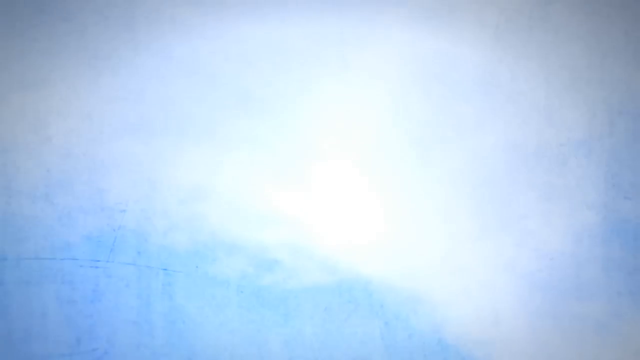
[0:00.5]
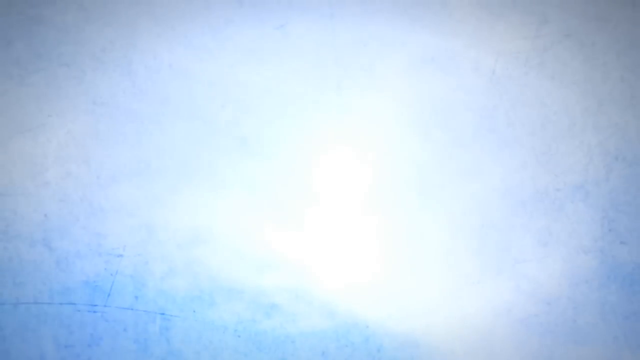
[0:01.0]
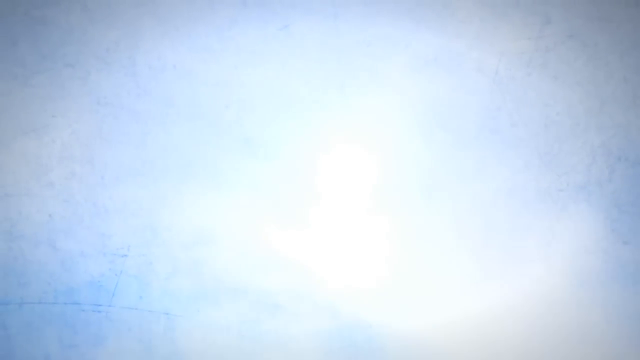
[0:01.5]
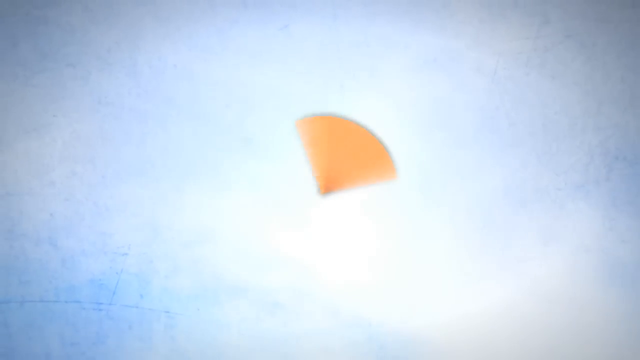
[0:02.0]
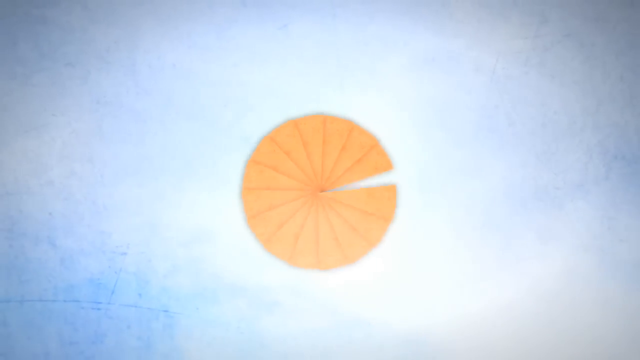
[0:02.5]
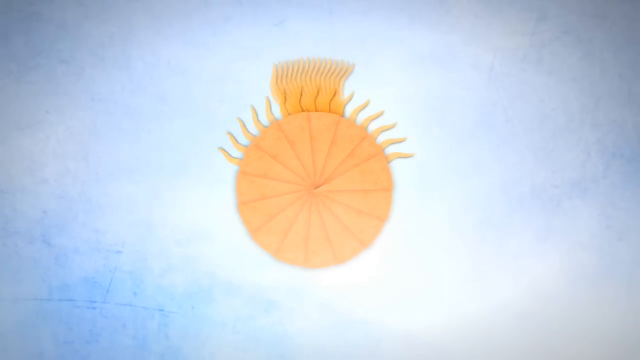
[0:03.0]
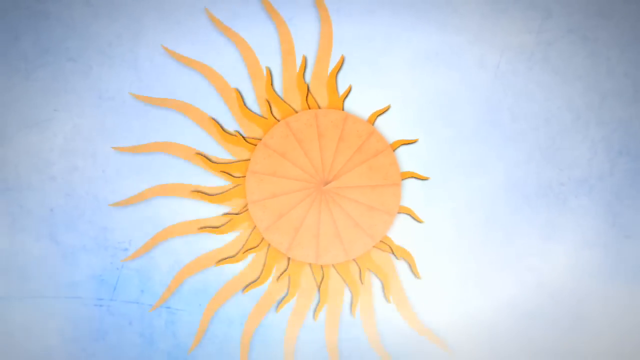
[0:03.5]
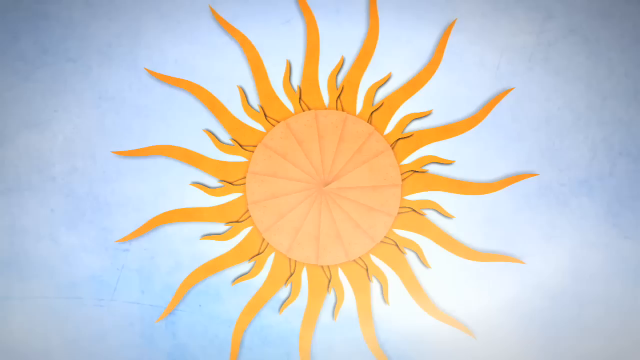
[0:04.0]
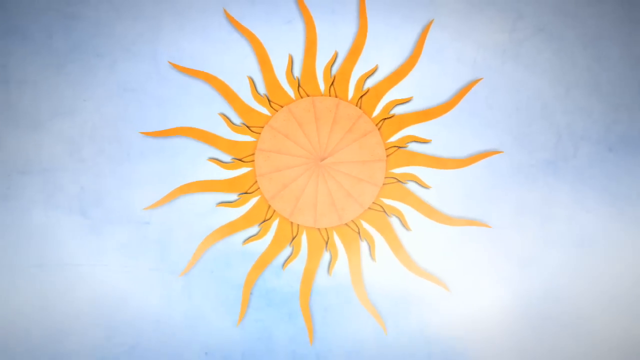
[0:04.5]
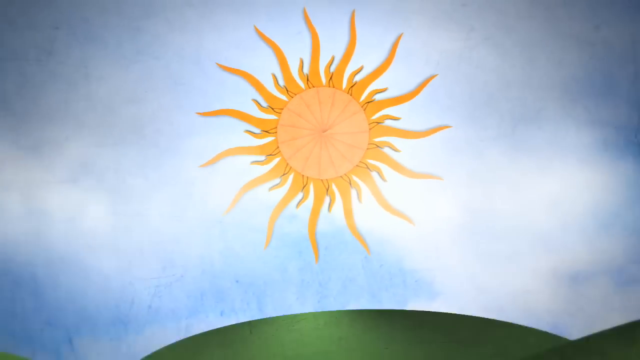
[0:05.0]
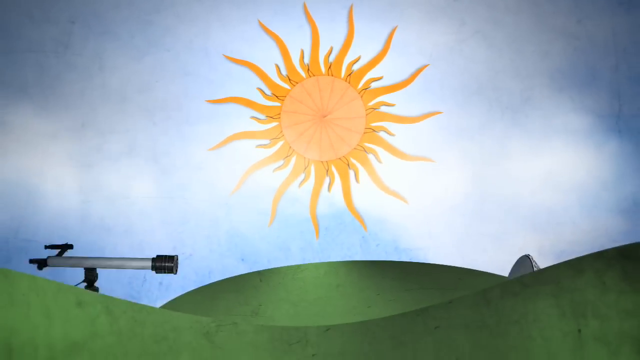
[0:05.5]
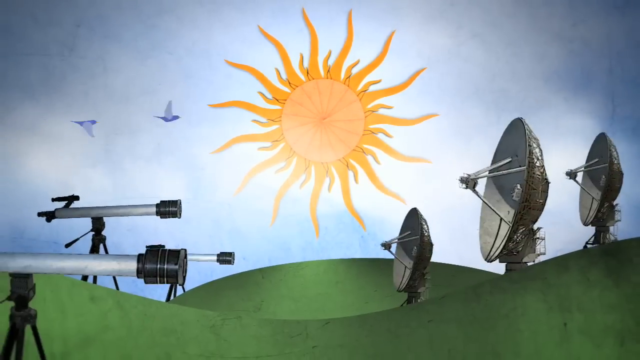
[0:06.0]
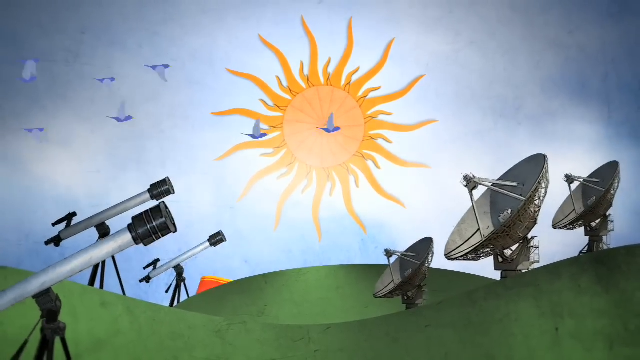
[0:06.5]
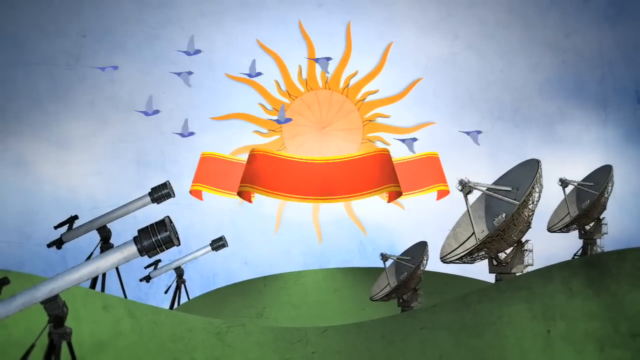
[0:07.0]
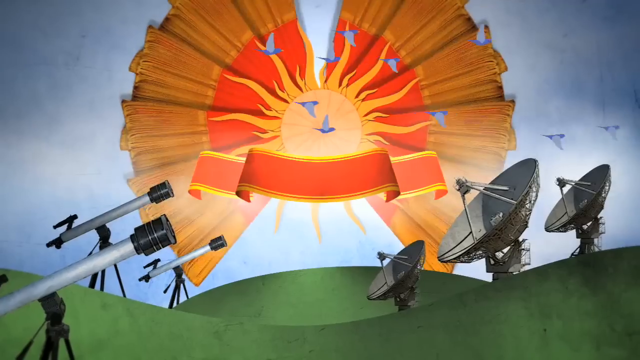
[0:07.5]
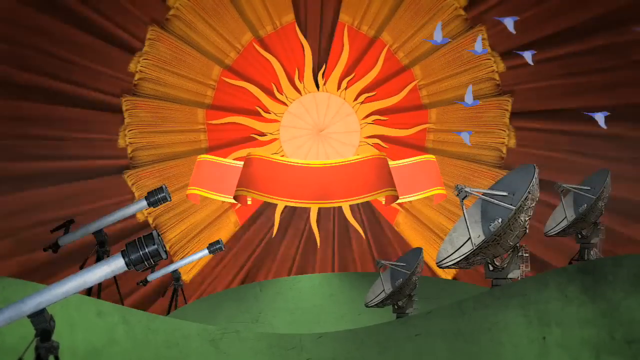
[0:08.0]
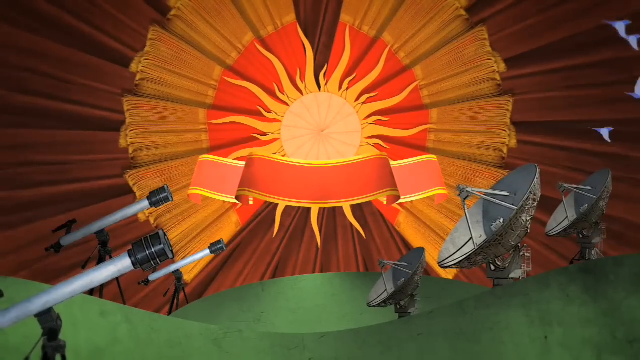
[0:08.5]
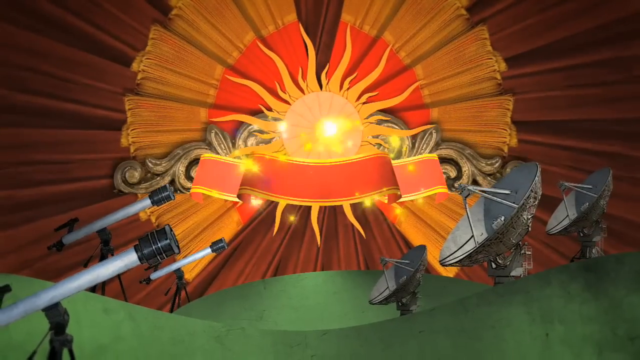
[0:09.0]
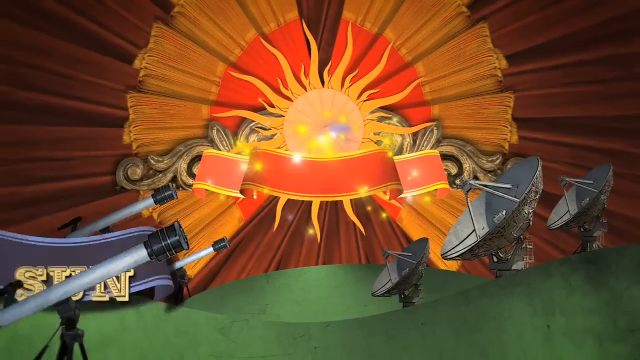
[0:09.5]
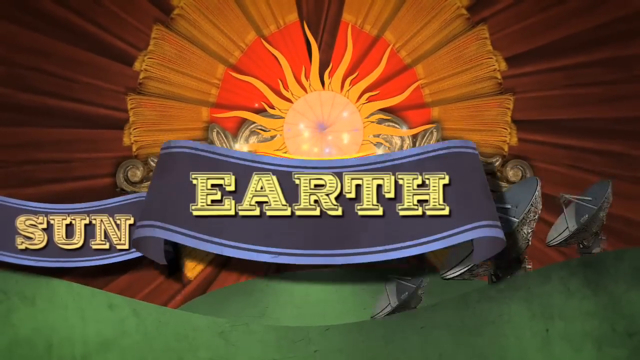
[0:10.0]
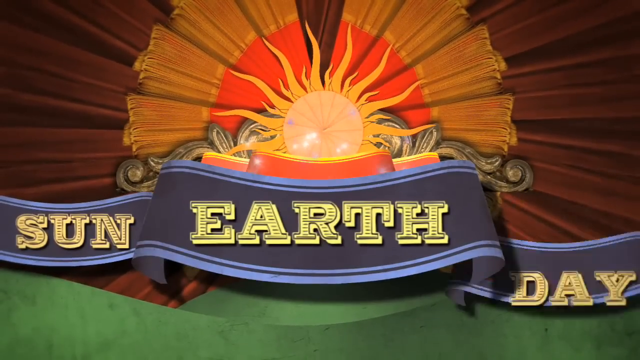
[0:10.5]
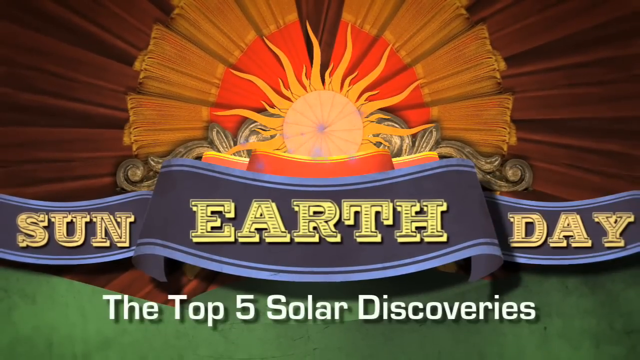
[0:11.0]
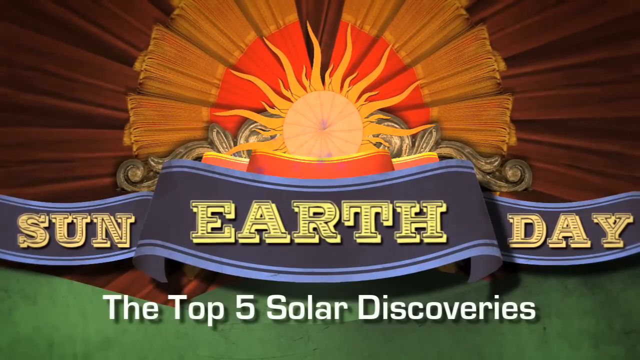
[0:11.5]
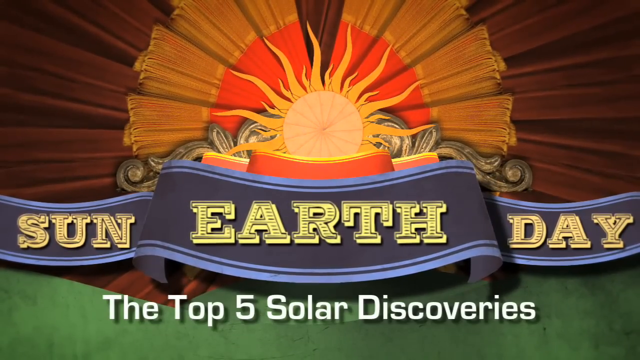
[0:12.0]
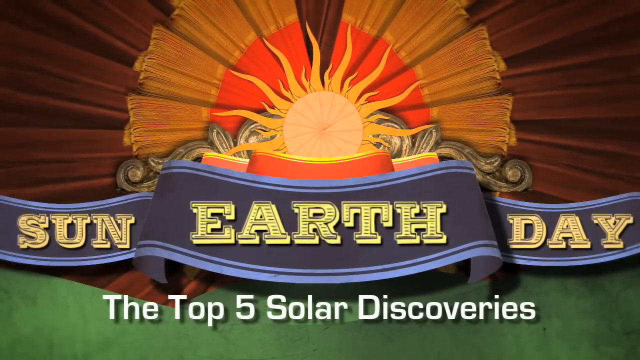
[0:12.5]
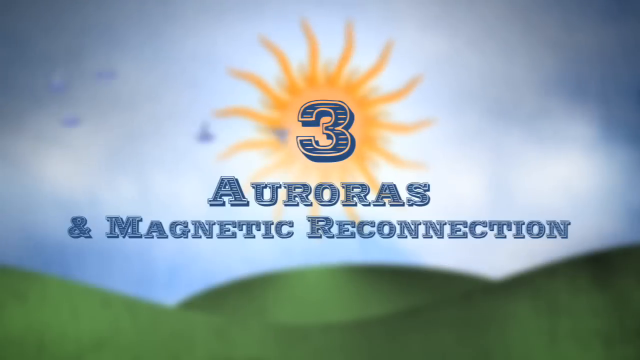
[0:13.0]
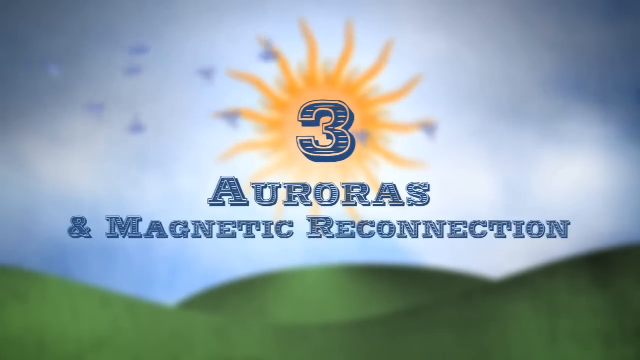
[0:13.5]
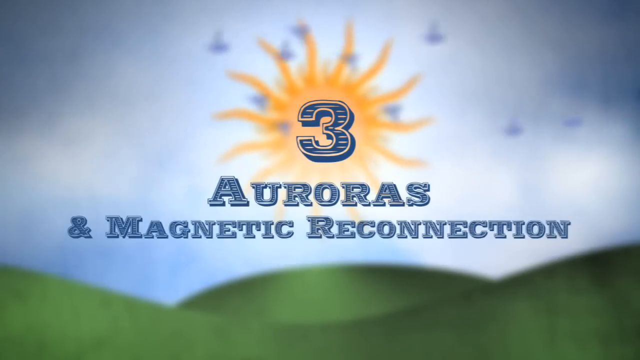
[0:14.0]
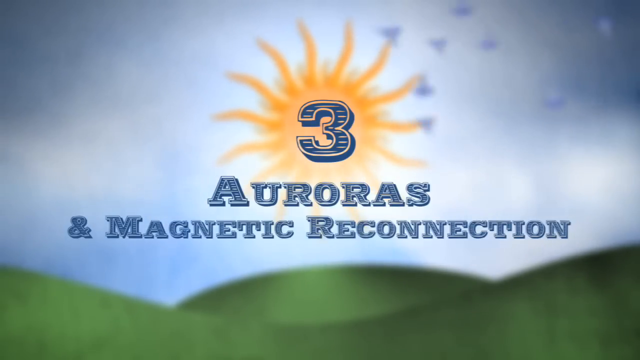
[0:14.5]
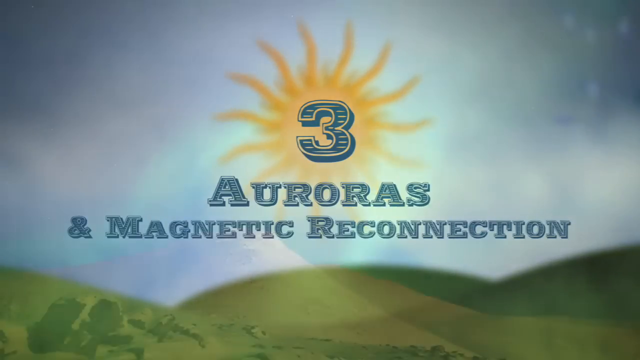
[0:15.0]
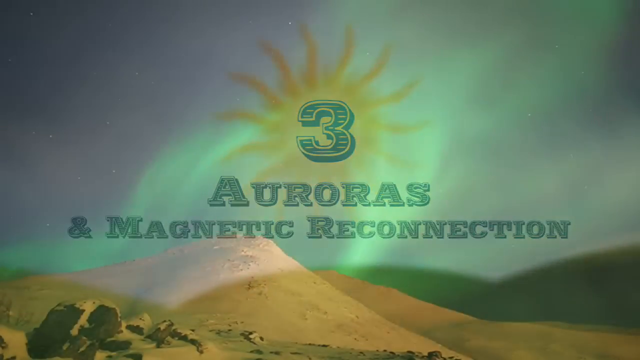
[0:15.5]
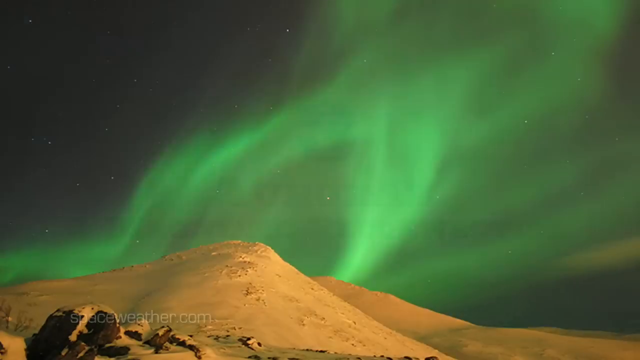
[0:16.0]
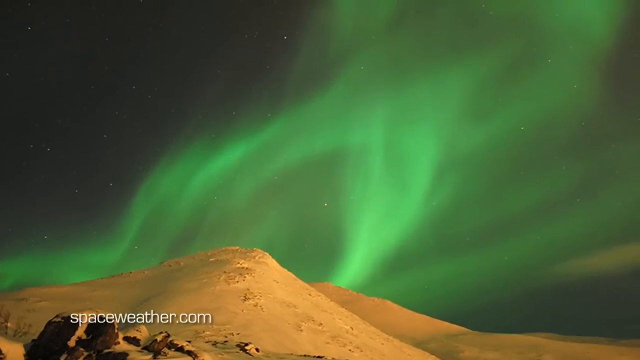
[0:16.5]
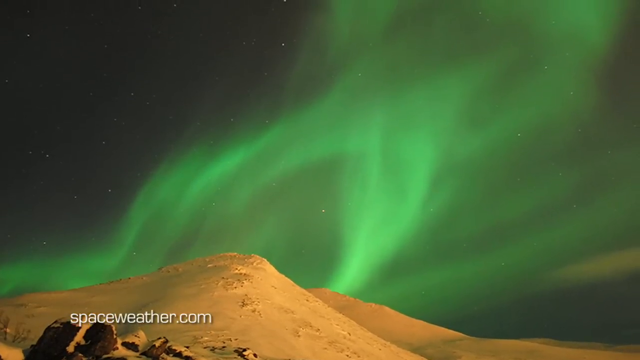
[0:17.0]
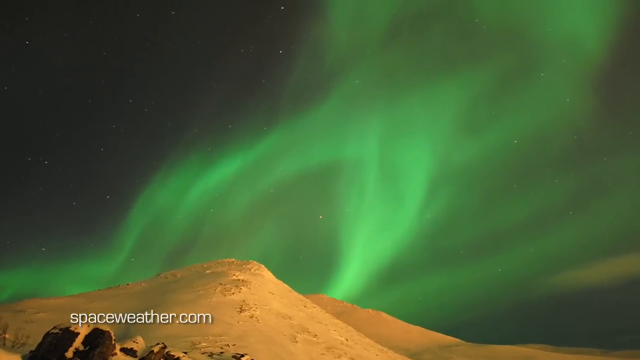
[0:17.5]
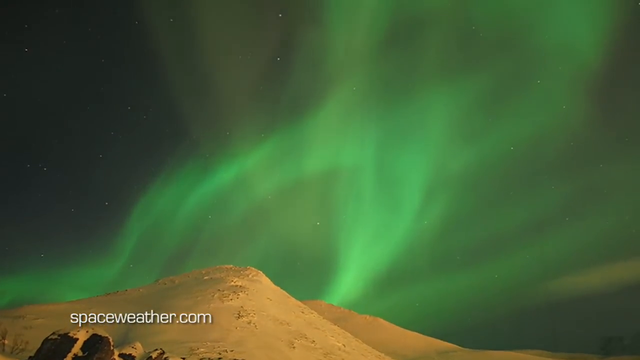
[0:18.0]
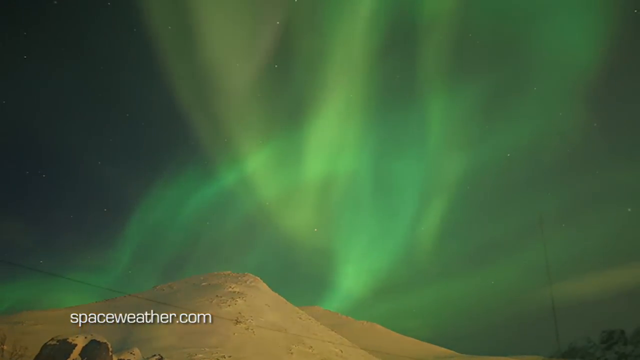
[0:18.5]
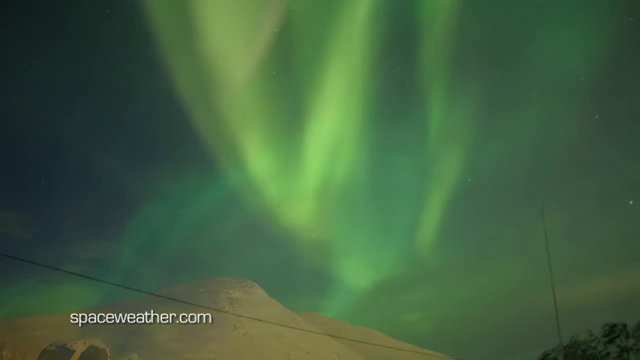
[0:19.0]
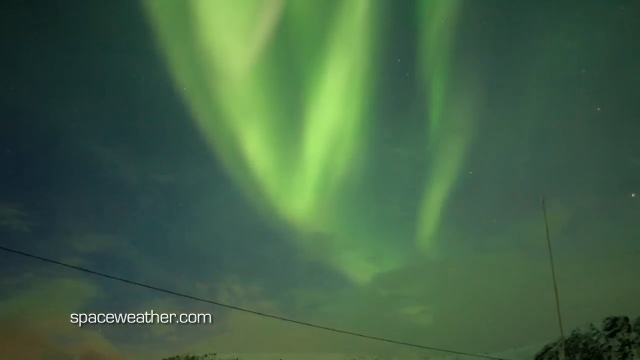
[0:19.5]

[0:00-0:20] The animation starts with a plain blue screen. A yellow circle appears and turns into the sun, with a banner underneath it, and green fields appear in the front of the screen. Three satellite dishes are on the bottom right-hand side of the screen, blue birds fly through the sky, and on the bottom left-hand side three telescopes point up toward the sky. Graphics come up in a blue ribbon that reads "sun, earth, day, the top five solar discoveries." Large blue writing then reads "three auroras and magnetic reconnection." Next come mountains and a sky with green colours in it from the aurora borealis, with a caption reading "spaceweather.com."